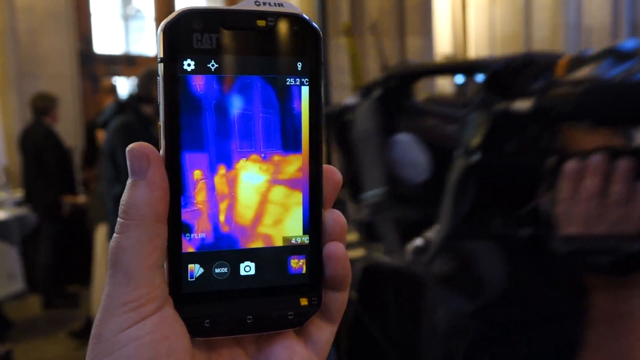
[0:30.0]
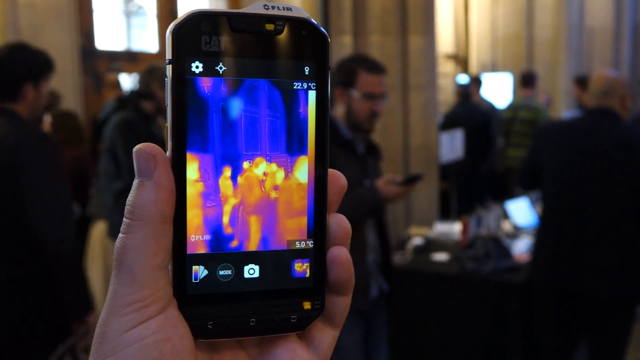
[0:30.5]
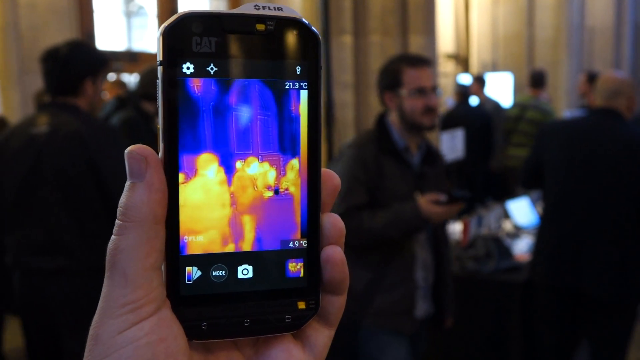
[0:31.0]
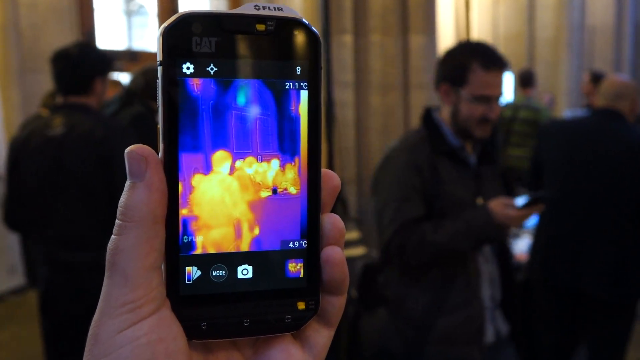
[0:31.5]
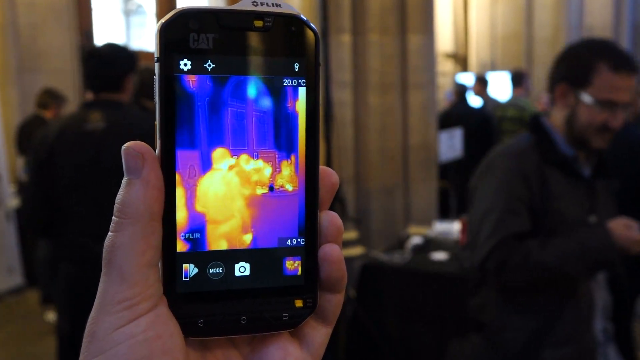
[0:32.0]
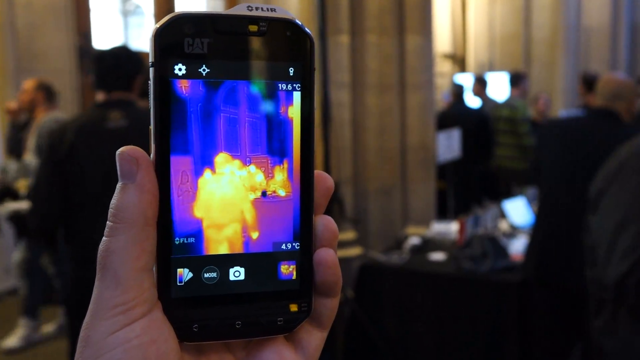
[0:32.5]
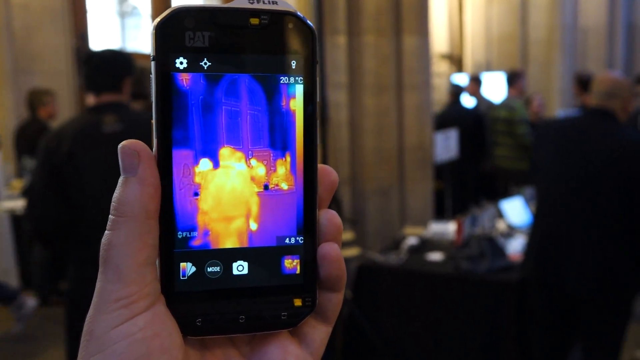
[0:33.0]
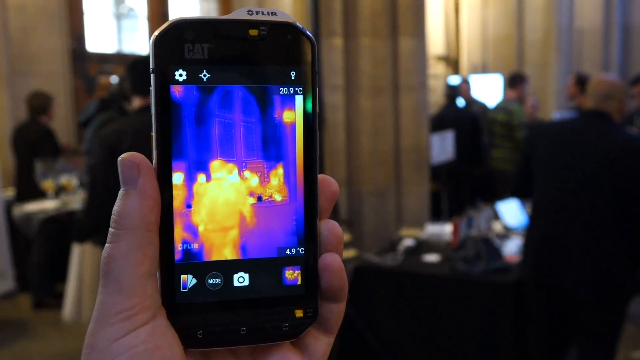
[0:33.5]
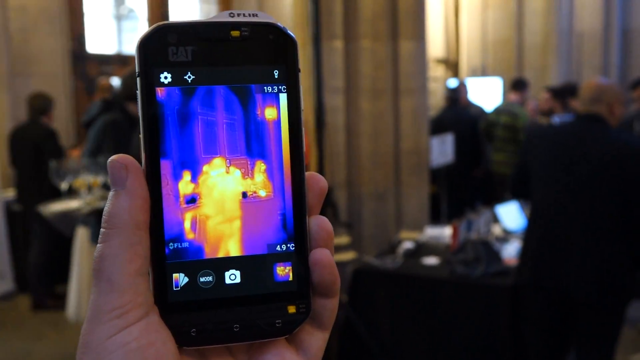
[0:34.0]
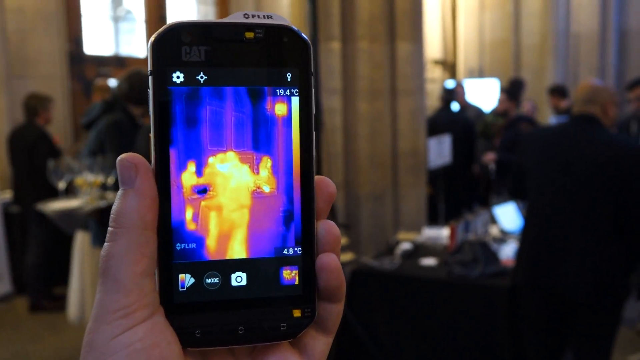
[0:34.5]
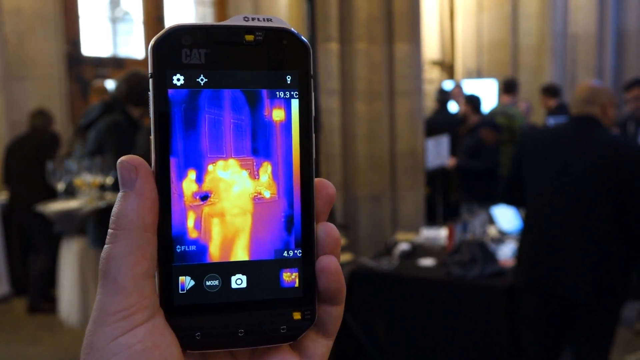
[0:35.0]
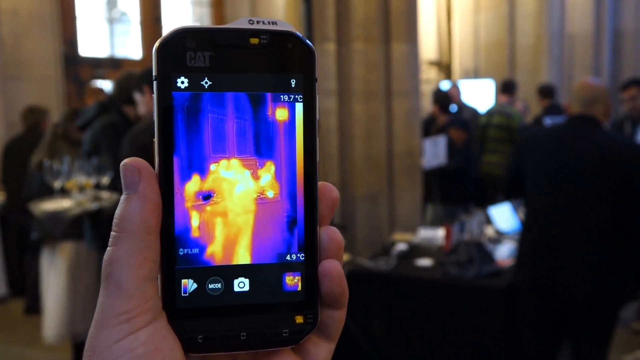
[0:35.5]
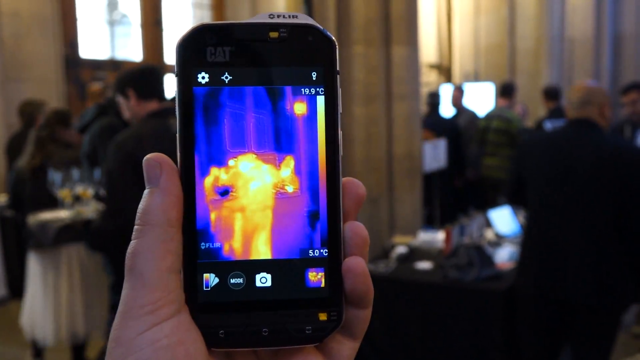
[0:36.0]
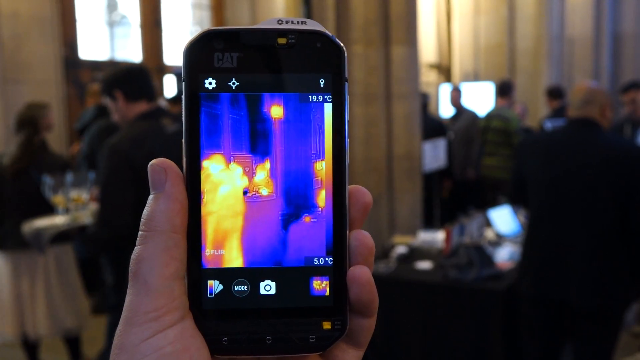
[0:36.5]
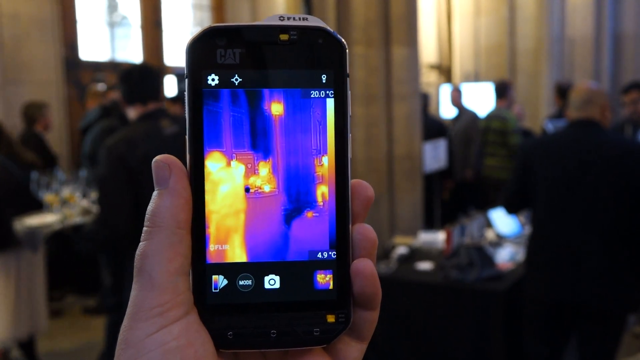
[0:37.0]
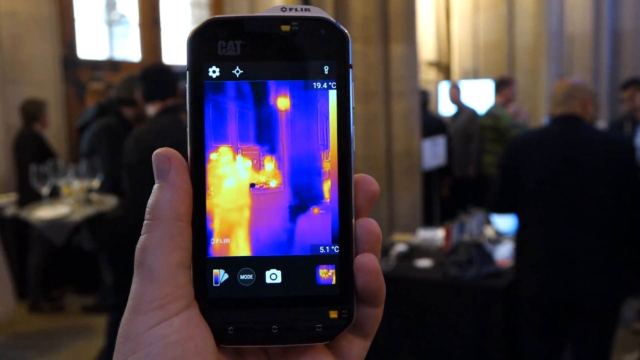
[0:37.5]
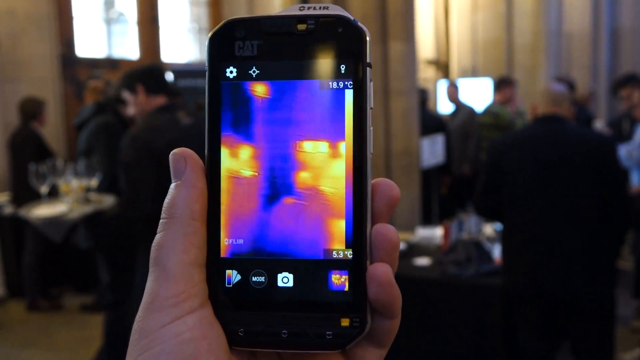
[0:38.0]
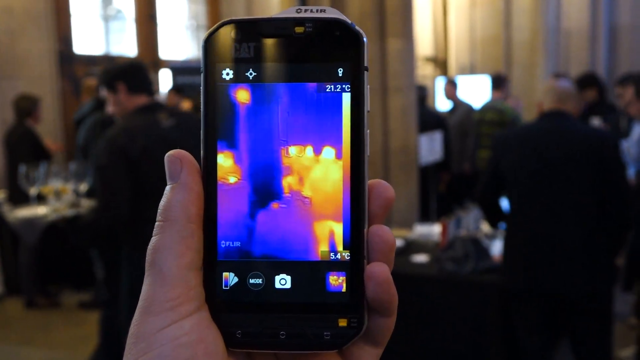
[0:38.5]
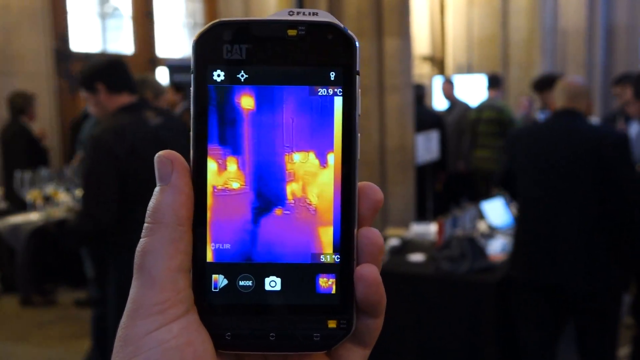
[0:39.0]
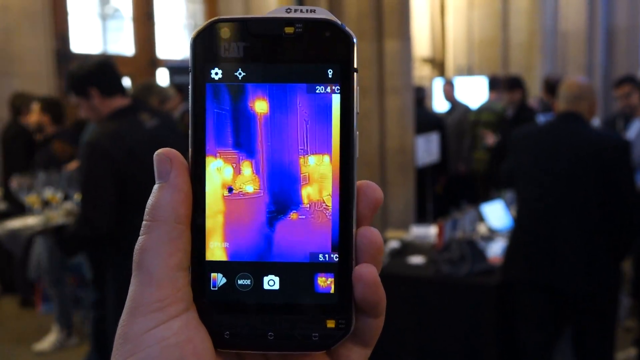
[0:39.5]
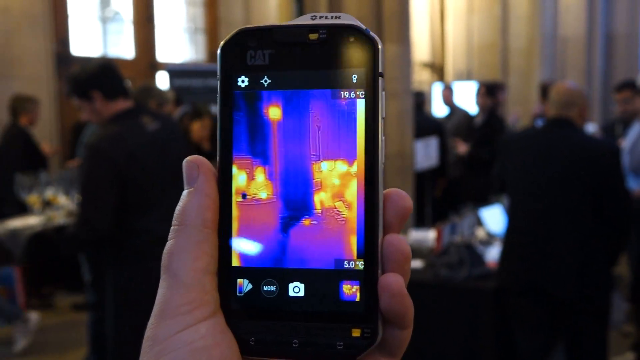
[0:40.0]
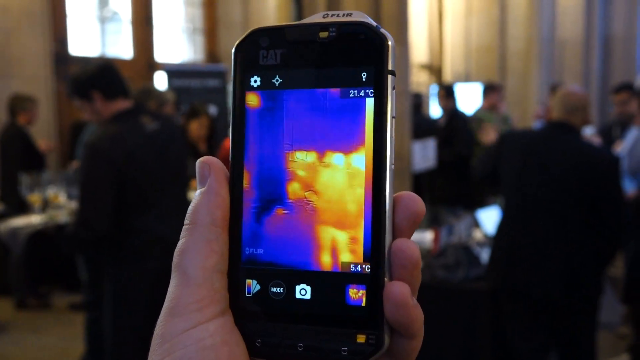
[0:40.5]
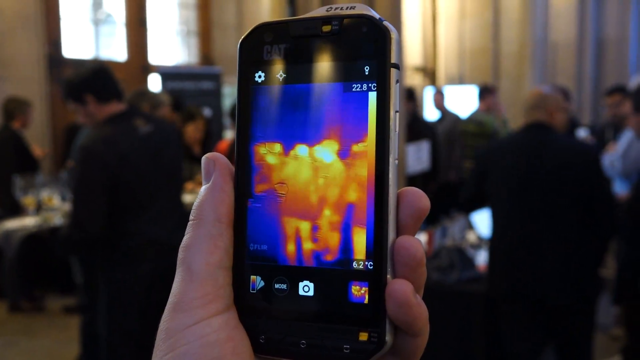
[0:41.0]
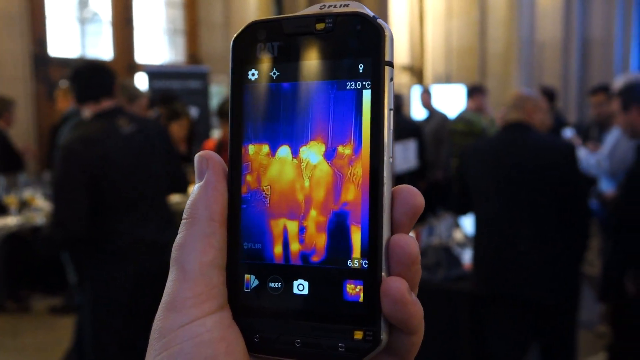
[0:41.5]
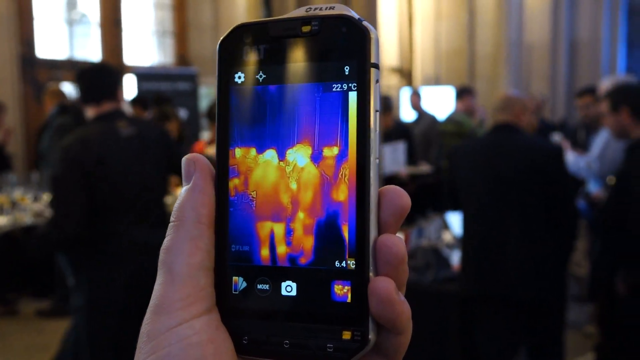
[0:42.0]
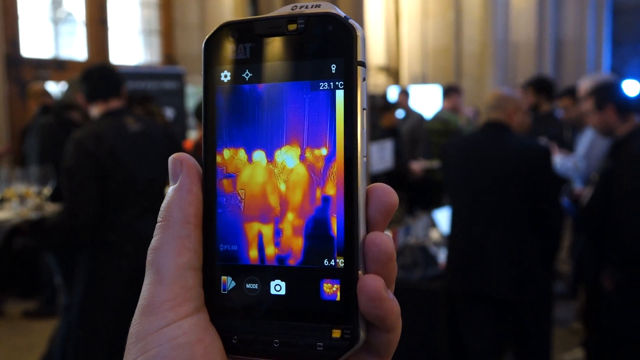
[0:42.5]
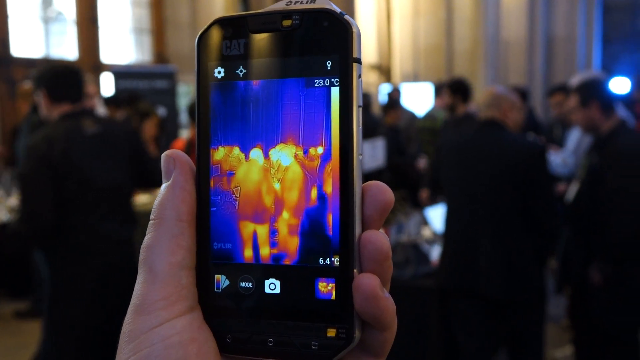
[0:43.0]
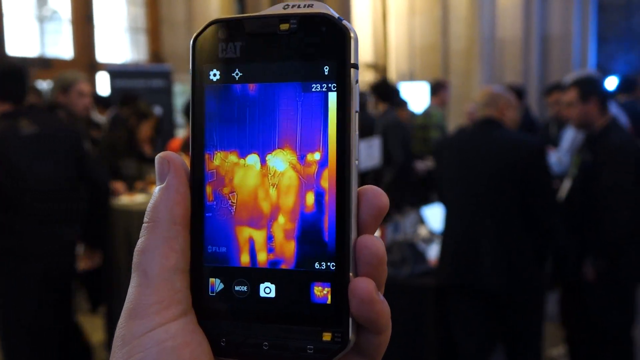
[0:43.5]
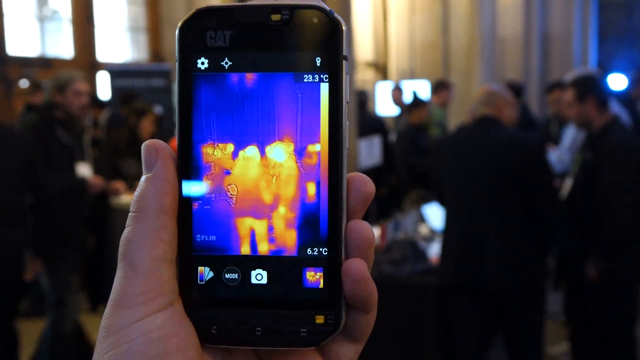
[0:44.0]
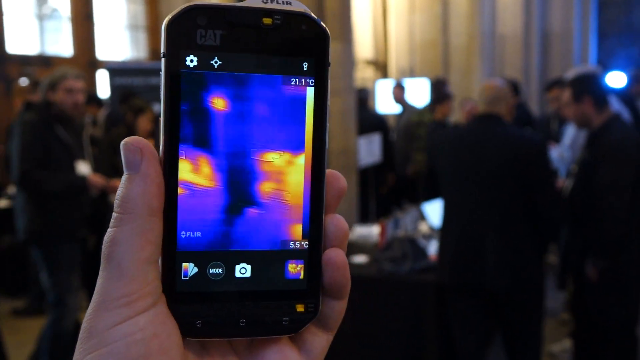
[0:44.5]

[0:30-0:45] The man still holds up the thermal imaging phone in his left hand, pointing it at people in the crowd; his hand is white. He starts pointing it at a waiter. The people in the background appear blurred, as the filming camera is focused close up on the phone. The somewhat blurred waiter holds a tray with a bunch of glasses and looks like he is collecting dirty glasses, cutlery and other things from the surrounding tables. Many people do not seem aware of the man, while others seem to glance at him as if wondering what he is doing. People appear somewhat formally dressed, some in suits, while others are more casually dressed in jeans. The event may be some kind of tech showcase or similar meeting, and drinks are being served.